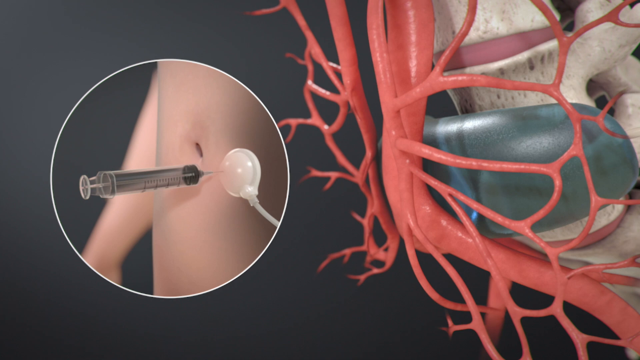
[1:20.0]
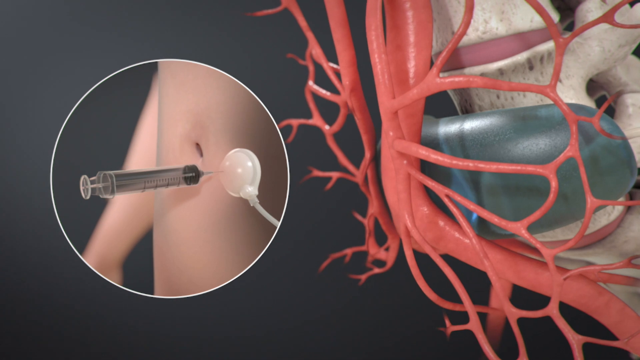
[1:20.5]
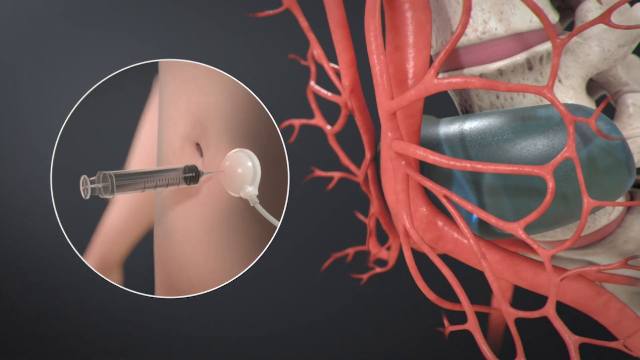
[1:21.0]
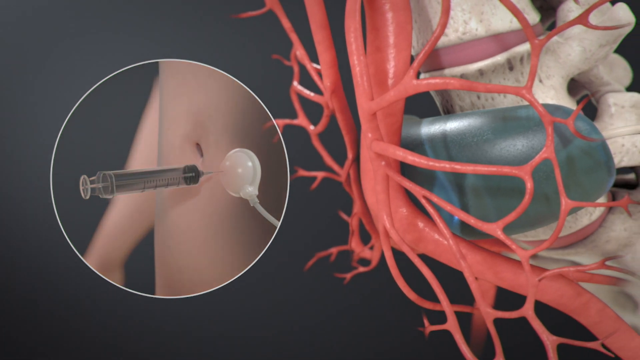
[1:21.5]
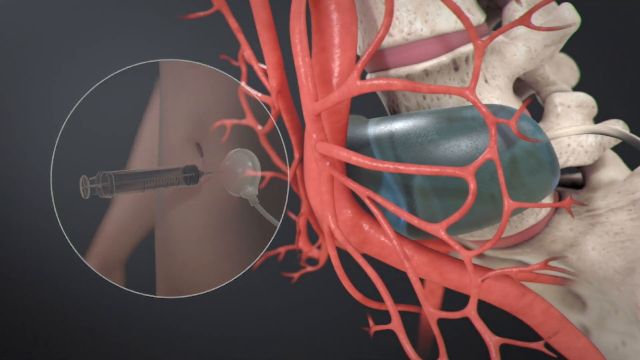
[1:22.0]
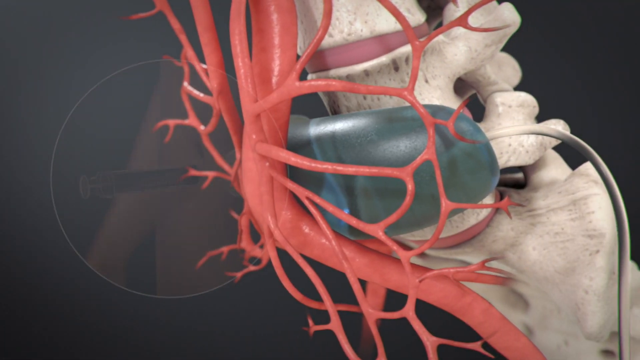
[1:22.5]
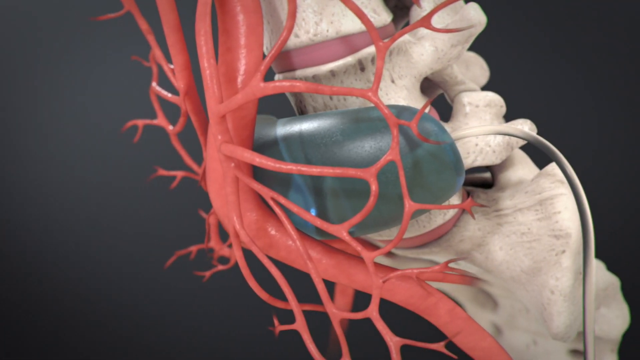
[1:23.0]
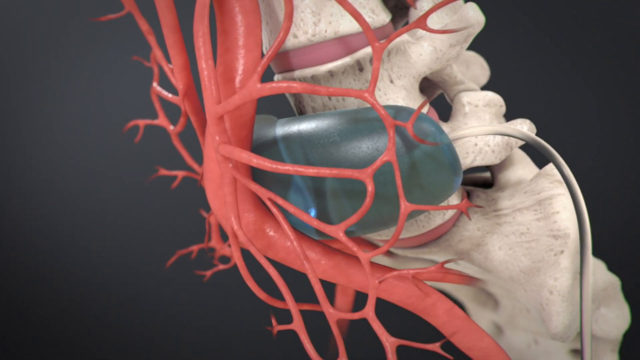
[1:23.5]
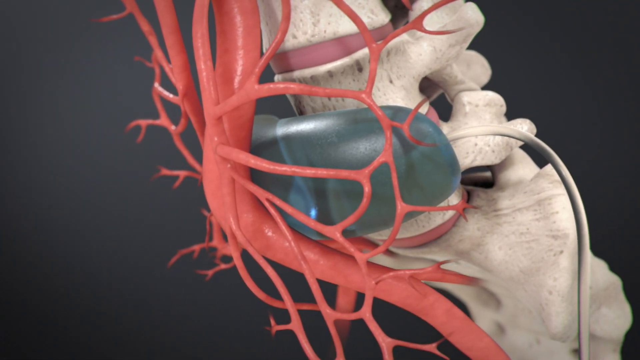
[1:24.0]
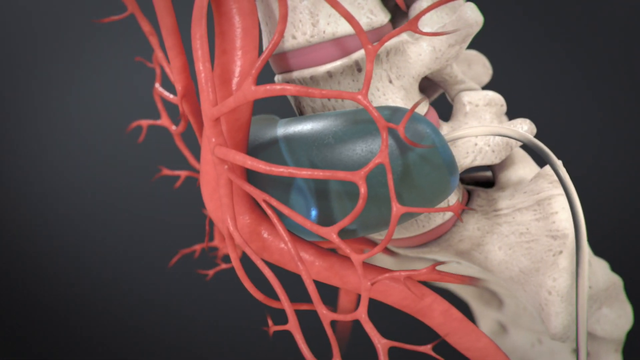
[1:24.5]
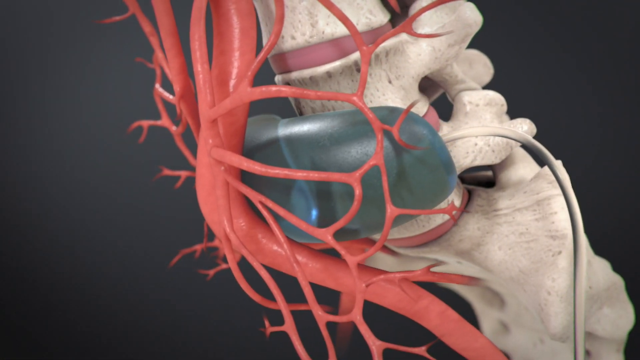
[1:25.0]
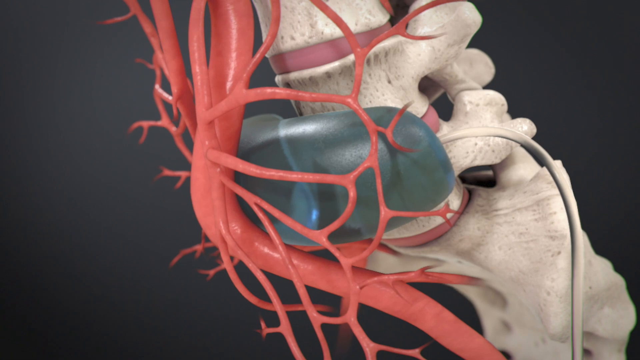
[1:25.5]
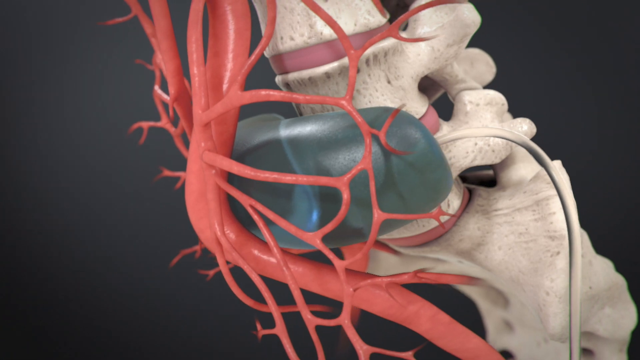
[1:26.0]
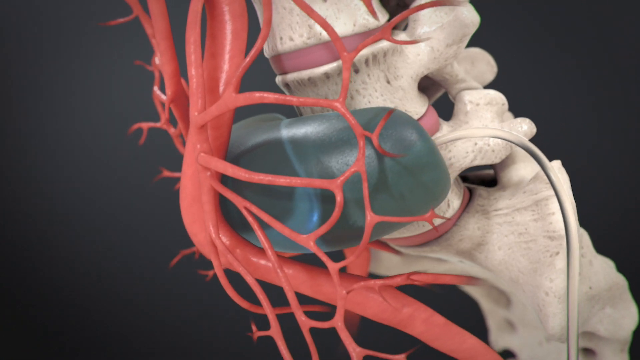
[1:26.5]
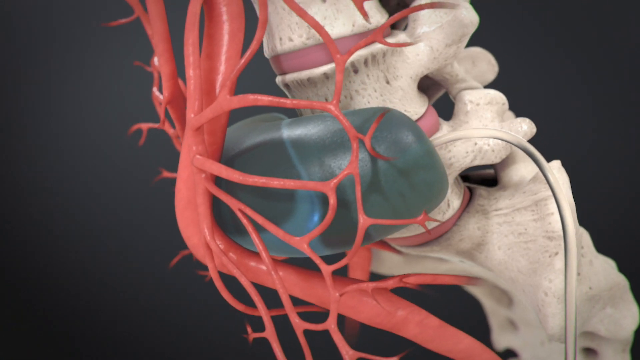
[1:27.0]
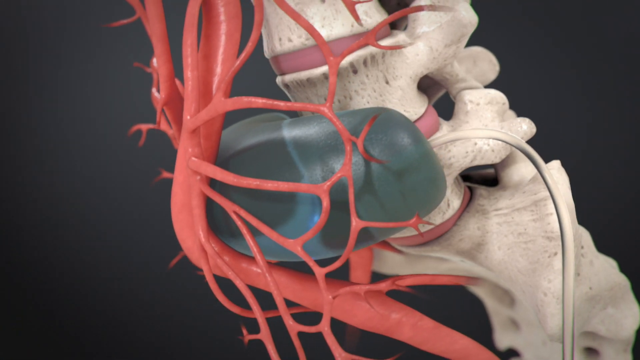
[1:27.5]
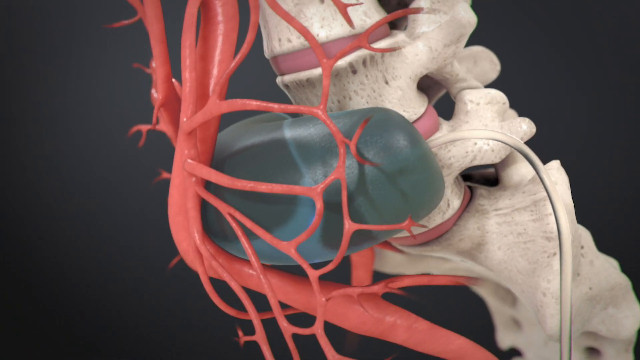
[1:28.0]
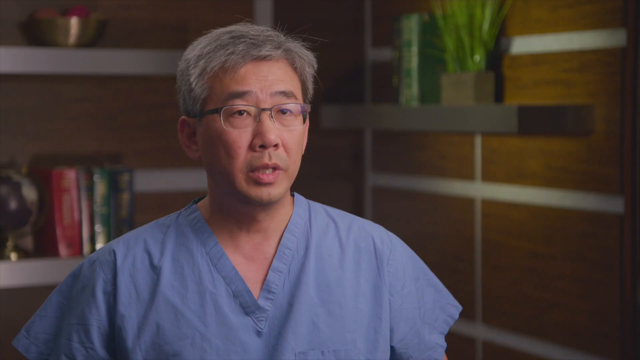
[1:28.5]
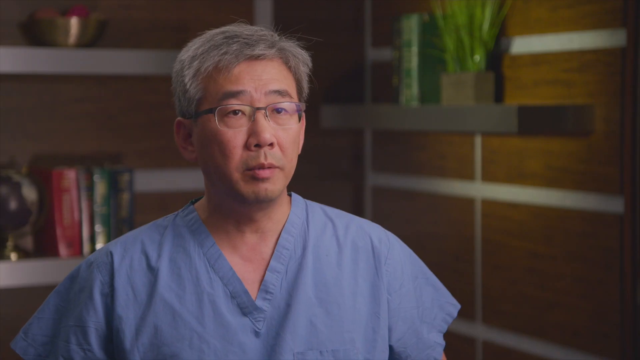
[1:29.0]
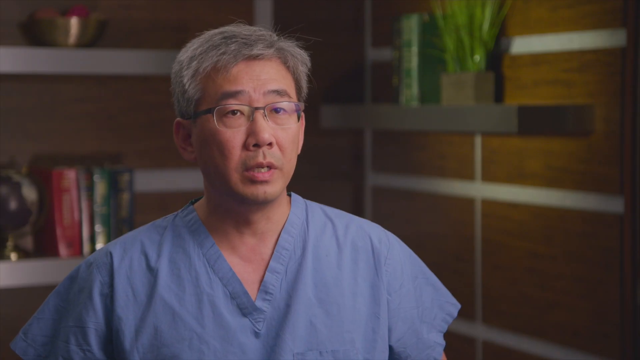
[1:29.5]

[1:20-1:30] The circle remains to the left of the diagram, showing an animated belly button area, with a partial view of an animated left arm in the background toward the left. To the right of the belly button, through the transparent skin, a white plastic lollipop-looking device or attachment is visible, connected to the device at the back of the spine toward the nerve section. A needle goes through the stomach into the device. The scene then changes to the animated diagram of the spine and nerve system, showing the long oval device inserted between the spine and the nerve system, with a tube coming from the right side of the device, curving around and going down toward the right.